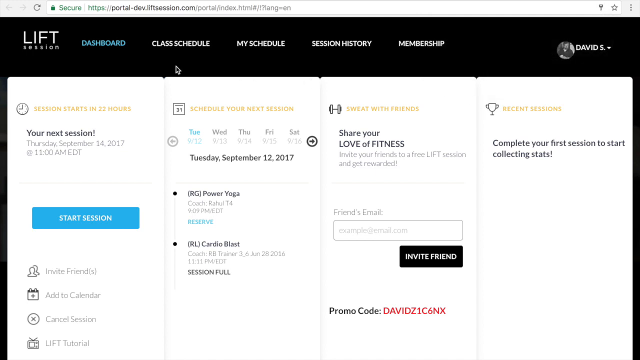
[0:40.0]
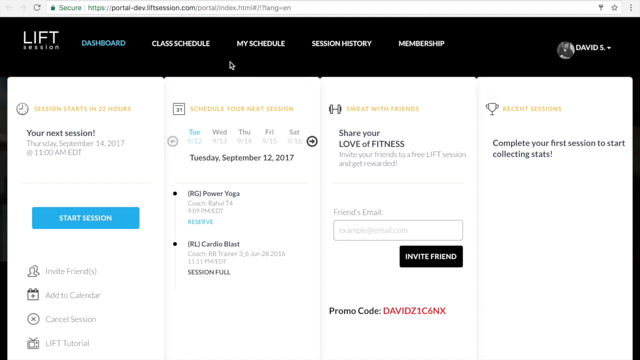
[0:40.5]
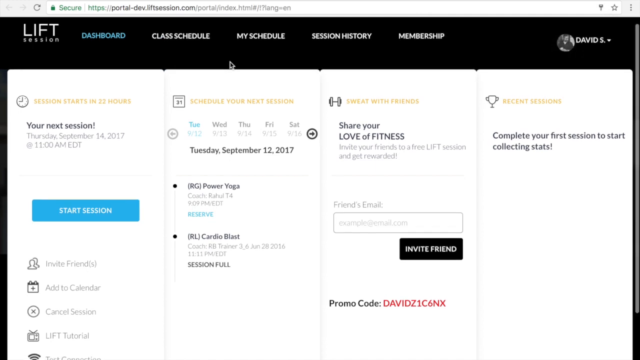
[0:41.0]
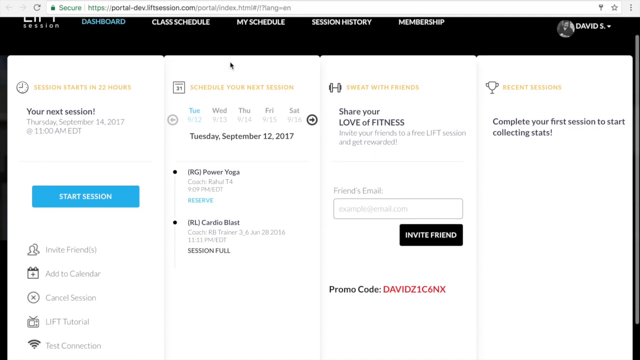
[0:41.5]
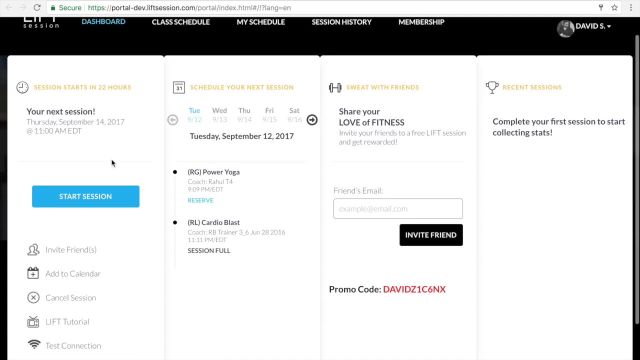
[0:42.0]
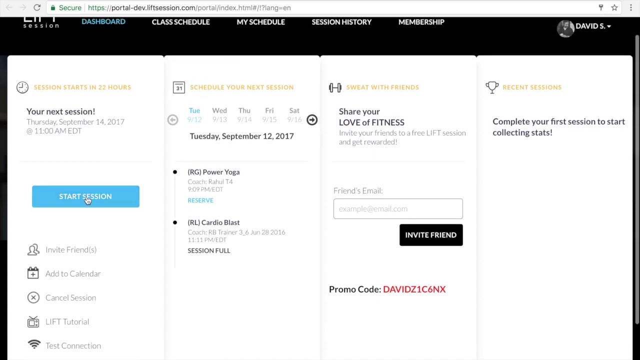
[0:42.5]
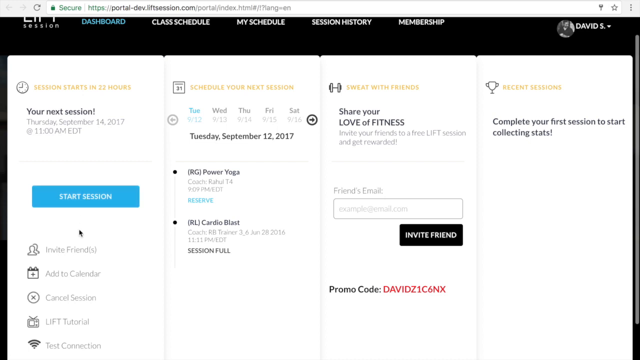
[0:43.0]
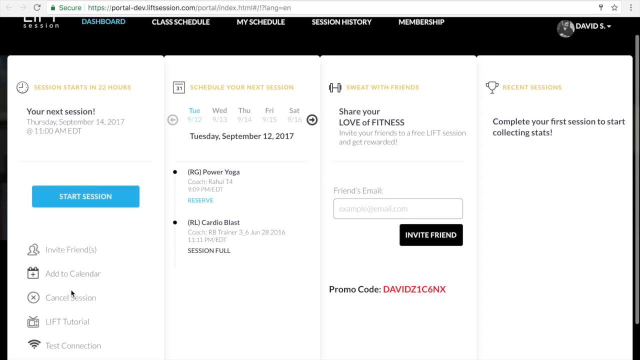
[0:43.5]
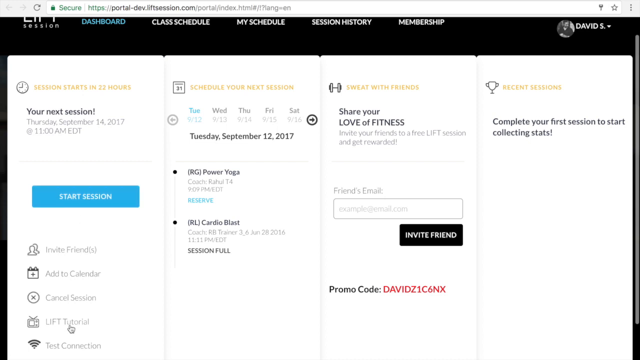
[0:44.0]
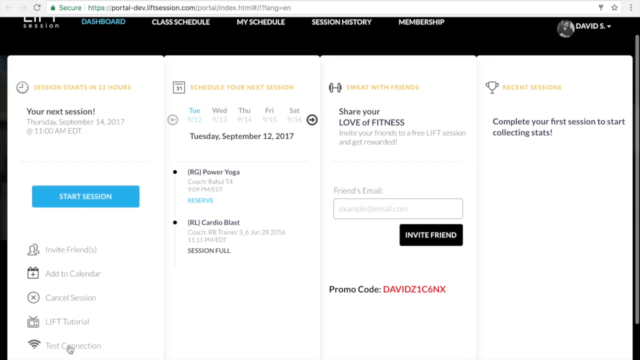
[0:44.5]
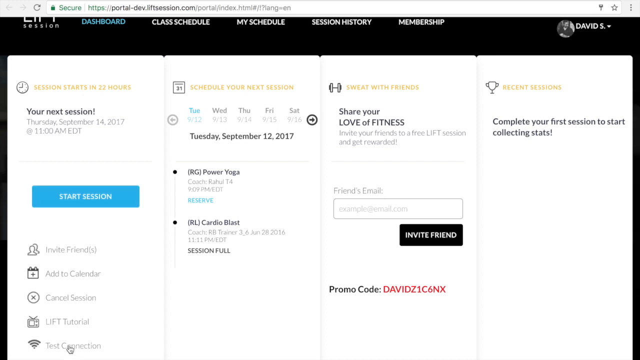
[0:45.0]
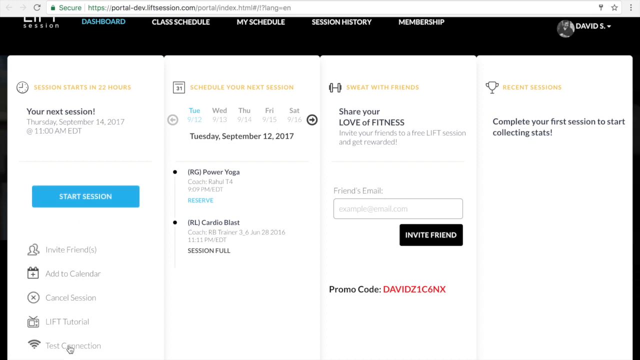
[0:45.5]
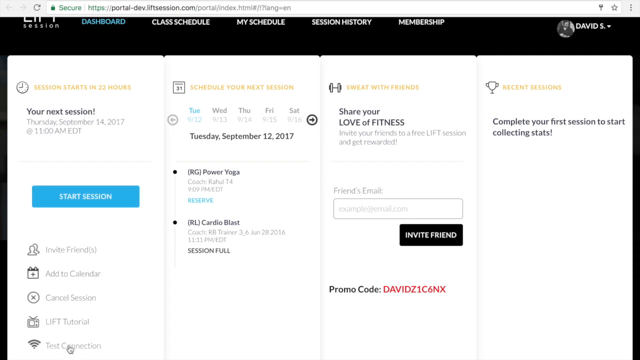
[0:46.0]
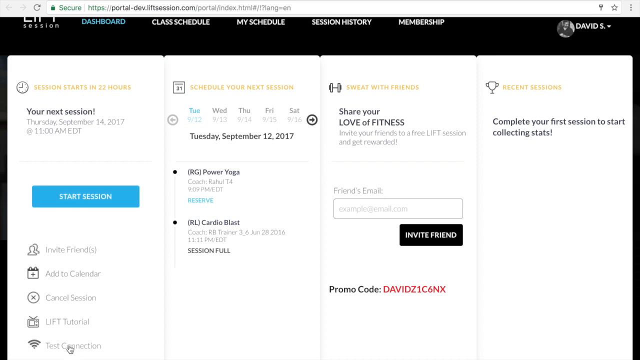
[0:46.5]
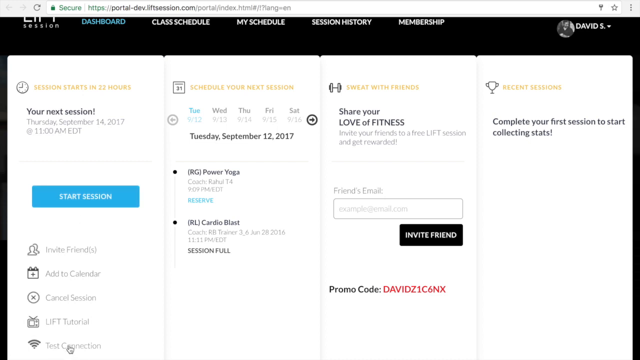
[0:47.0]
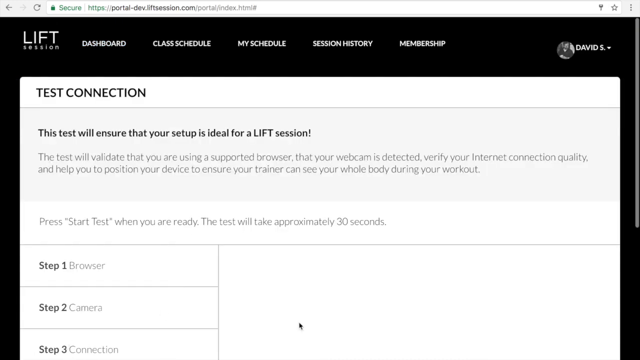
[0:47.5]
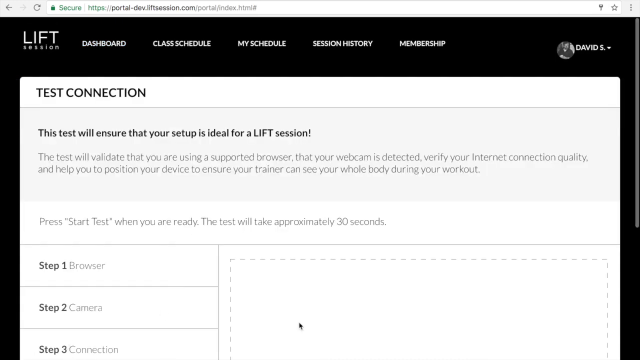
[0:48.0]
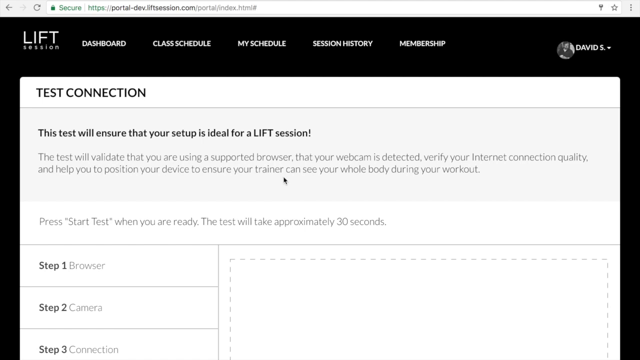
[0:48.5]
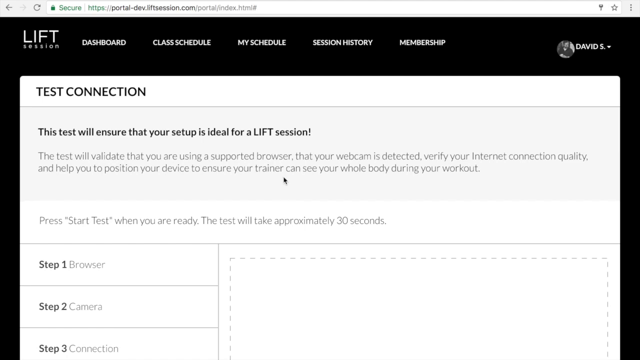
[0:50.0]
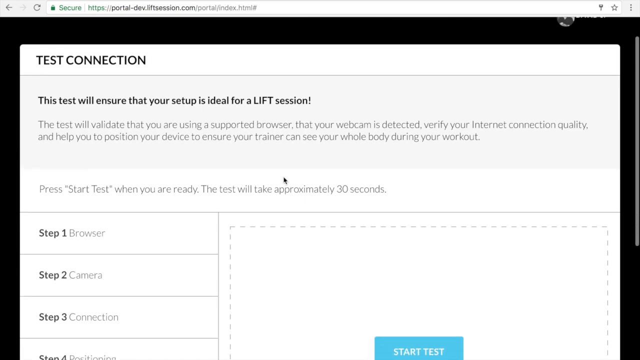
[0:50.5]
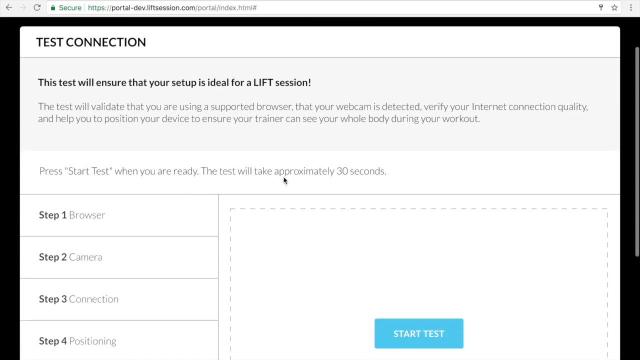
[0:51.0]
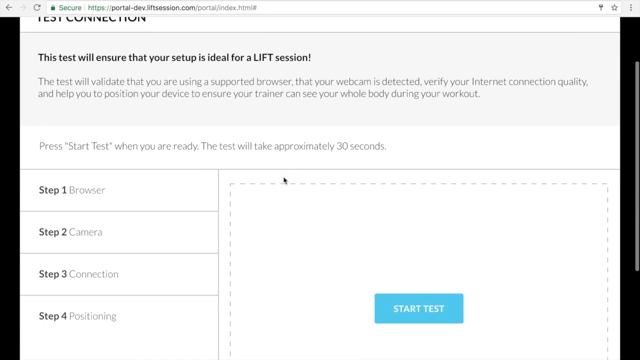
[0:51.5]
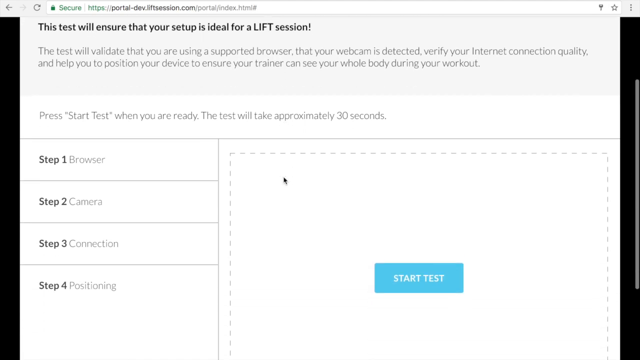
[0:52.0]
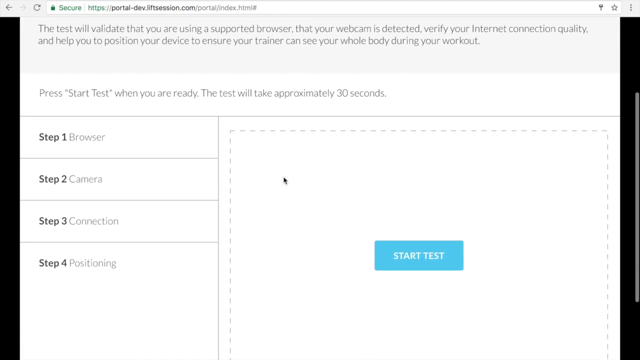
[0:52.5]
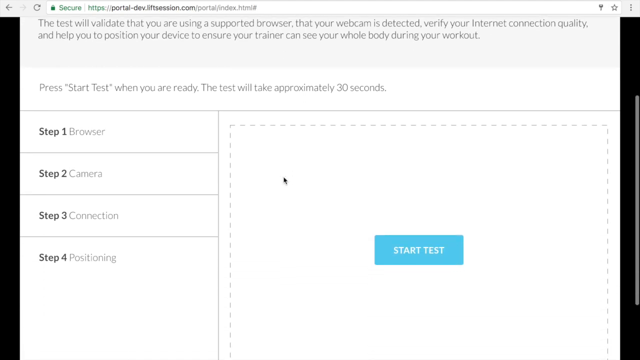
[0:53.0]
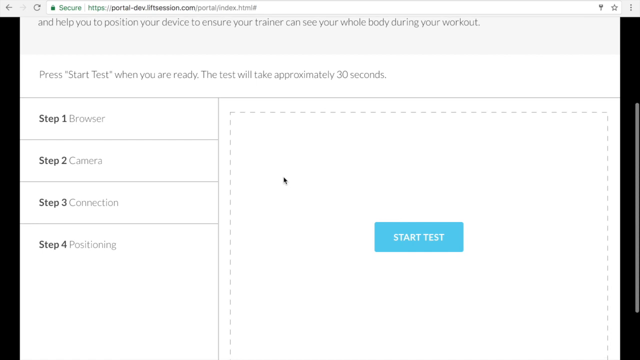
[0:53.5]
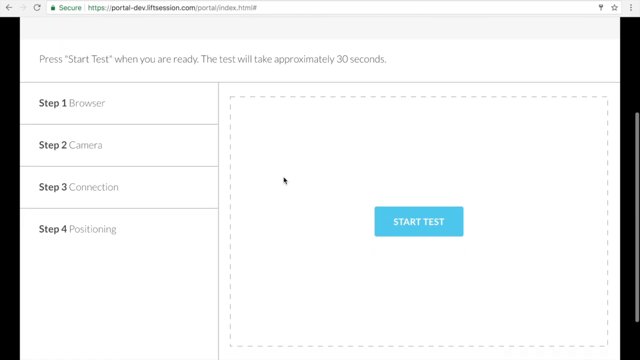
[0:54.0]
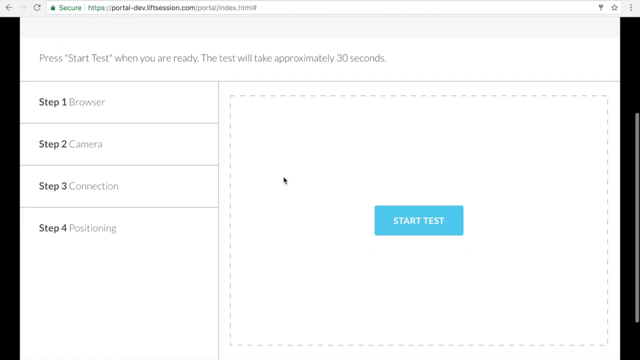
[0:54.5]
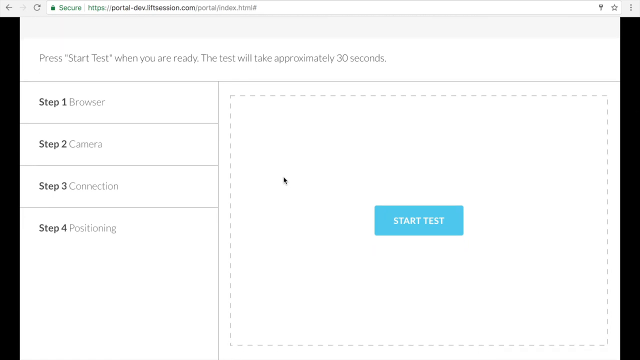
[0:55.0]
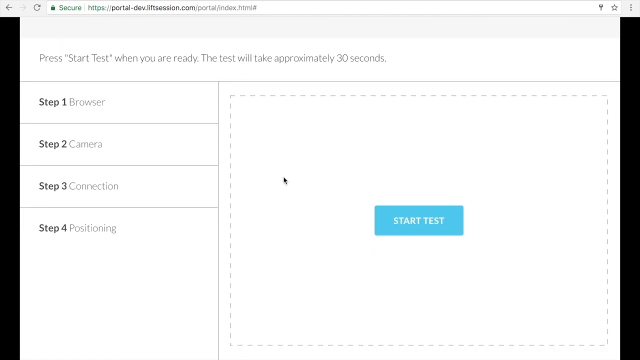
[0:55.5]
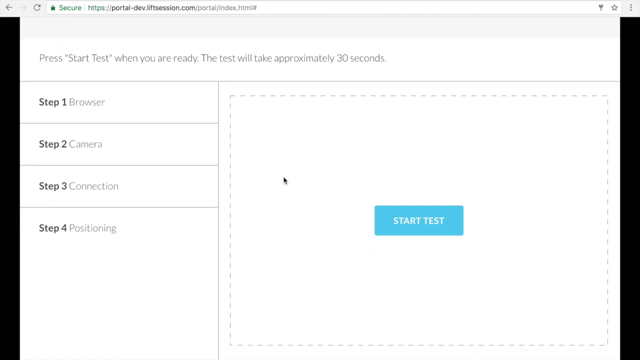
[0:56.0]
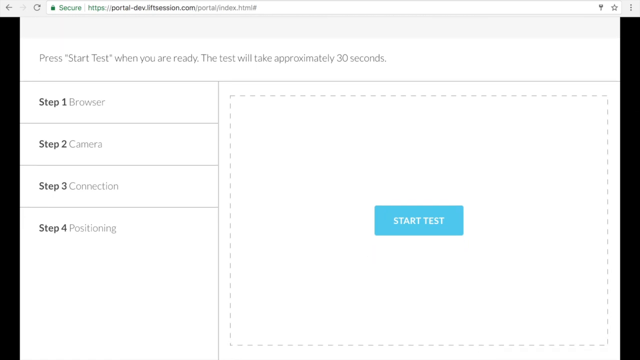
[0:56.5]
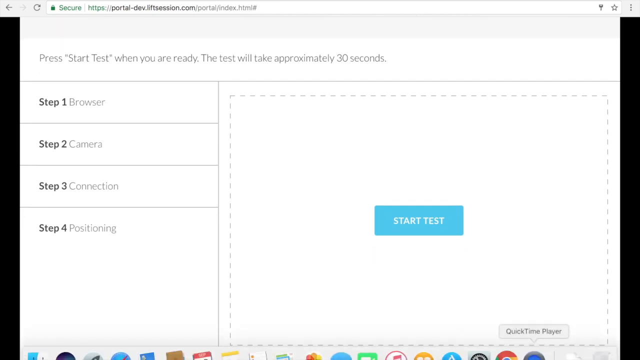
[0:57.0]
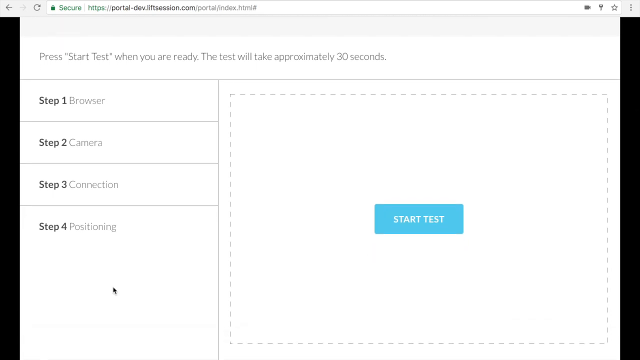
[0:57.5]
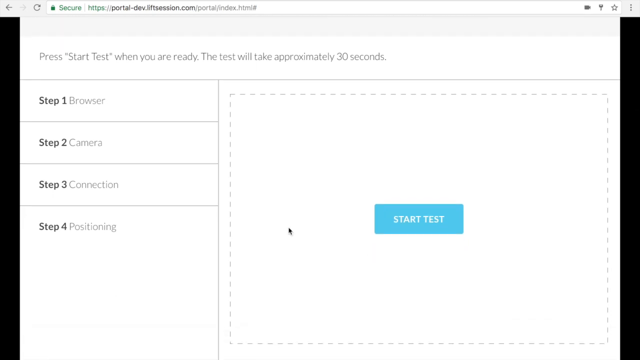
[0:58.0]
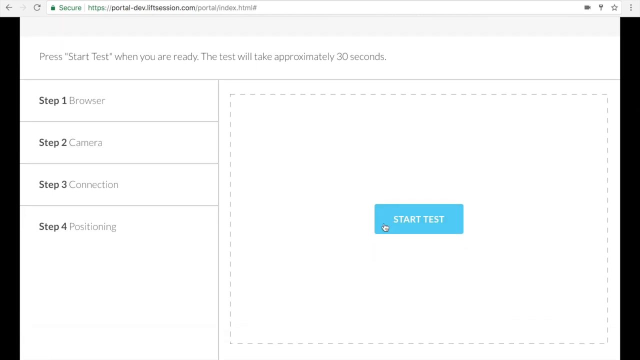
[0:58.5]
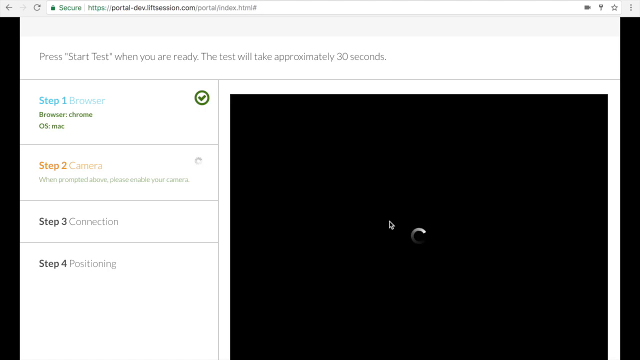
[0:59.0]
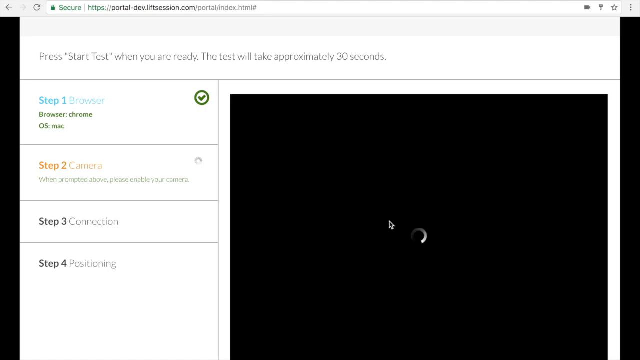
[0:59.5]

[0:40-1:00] A web page for Lift Sessions is shown. In the upper left corner it says "Lift Sessions," followed to the right by "Dashboard," "Class Schedule," "My Schedule," "Session History" and "Membership." On the upper right it says "David S" next to a circular photo area. The bottom half of the page has a white background. The cursor hovers beneath the Class Schedule option at the top, is dragged to the right, and the page is scrolled down. The cursor moves down and left above a blue button labelled "Start Session," then further down and left out of view. The screen changes to one labelled "Test Connection" at the top left in black text. The cursor moves up and the page scrolls down. On the left, a vertical list of steps reads "Step 1: Browser," "Step 2: Camera," "Step 3: Connection" and "Step 4: Positioning." In the lower right is a blue button labelled "Start Test." The page scrolls down a little more, the cursor moves down to the left side, then up and to the right and clicks Start Test. The right side of the screen turns black with a loading symbol in the middle.